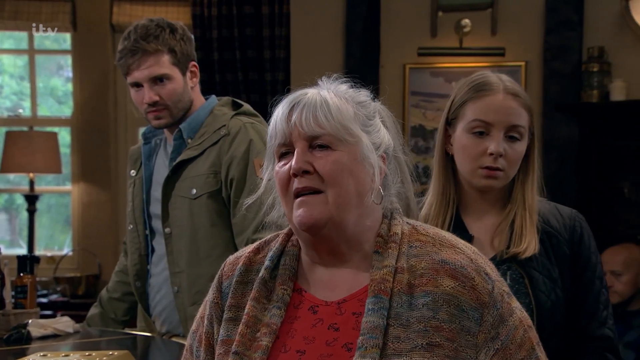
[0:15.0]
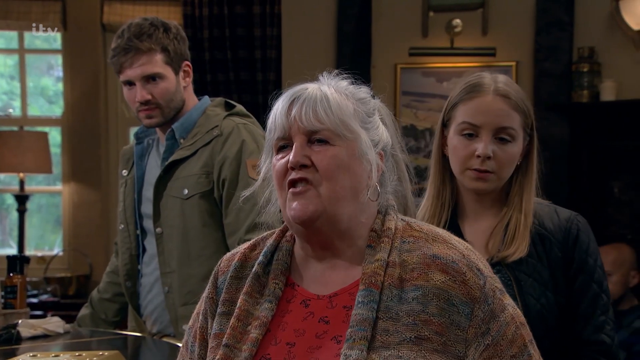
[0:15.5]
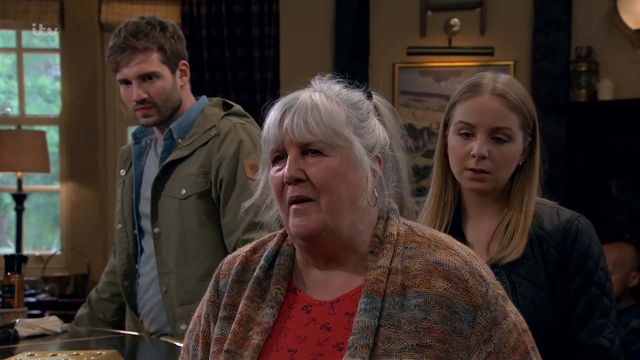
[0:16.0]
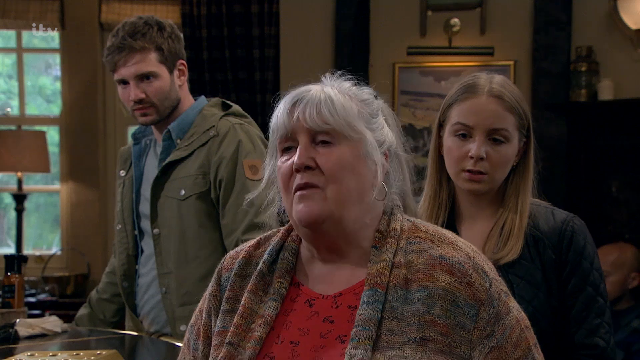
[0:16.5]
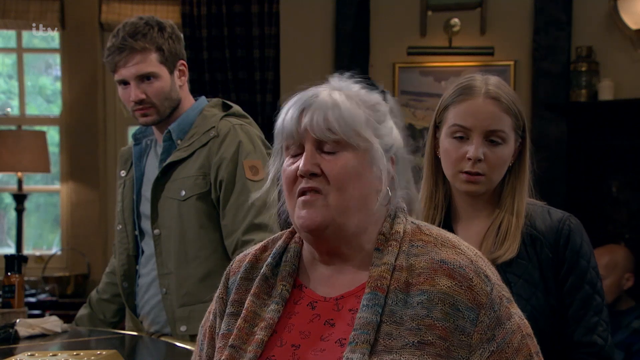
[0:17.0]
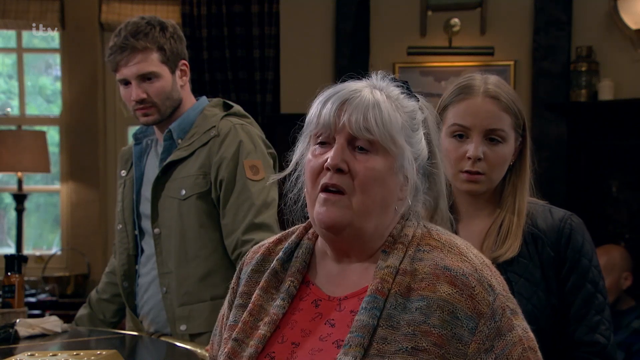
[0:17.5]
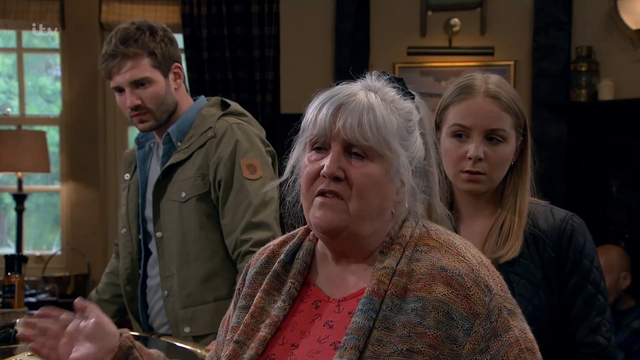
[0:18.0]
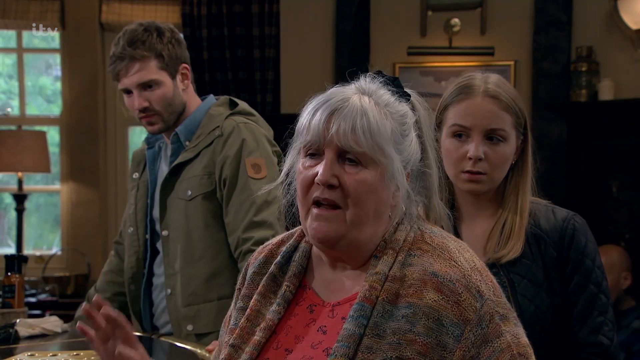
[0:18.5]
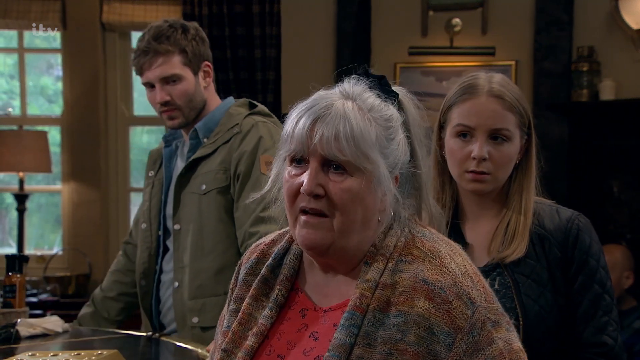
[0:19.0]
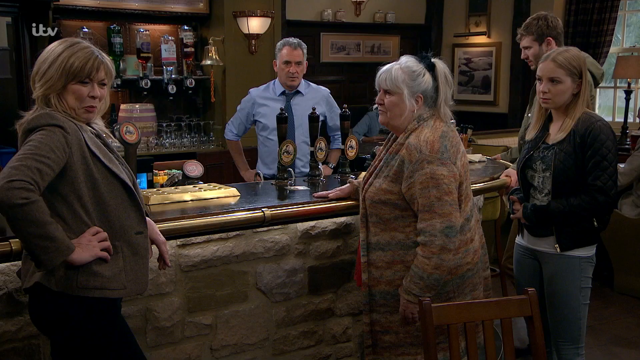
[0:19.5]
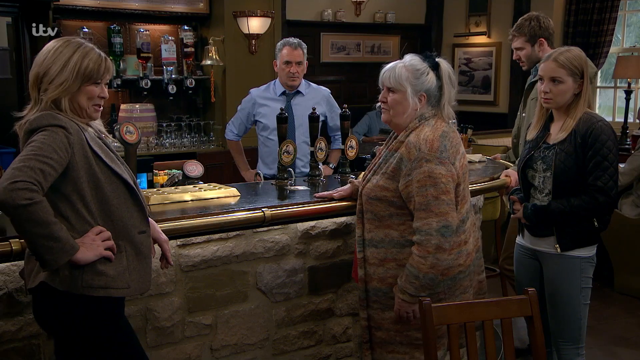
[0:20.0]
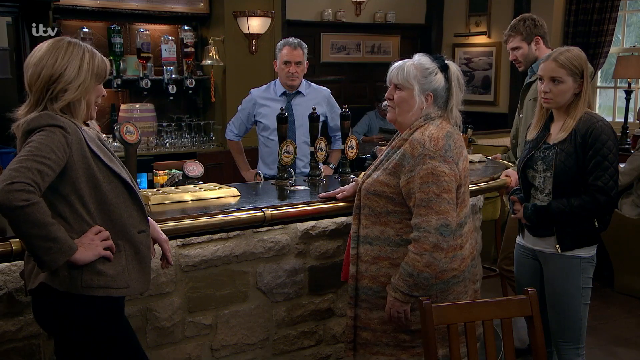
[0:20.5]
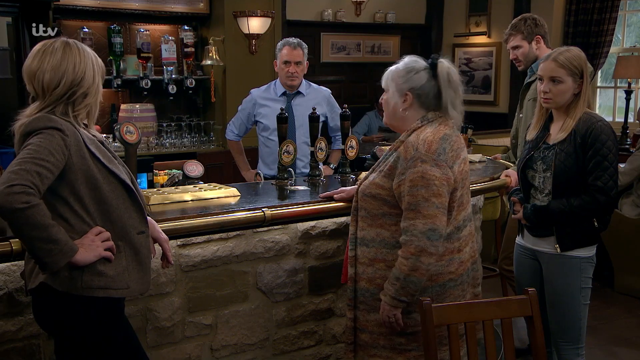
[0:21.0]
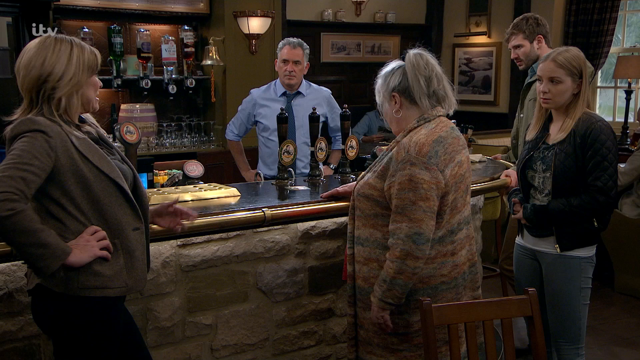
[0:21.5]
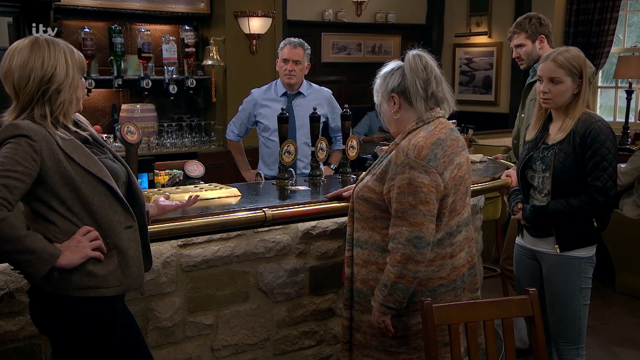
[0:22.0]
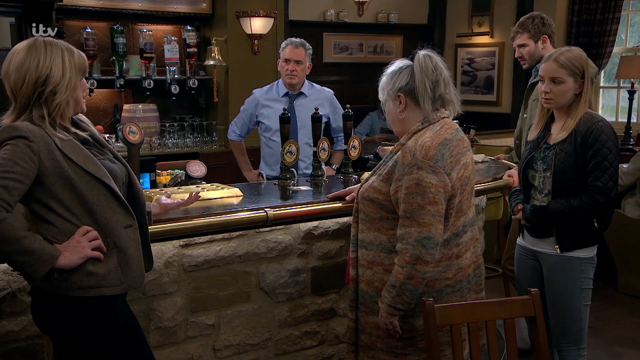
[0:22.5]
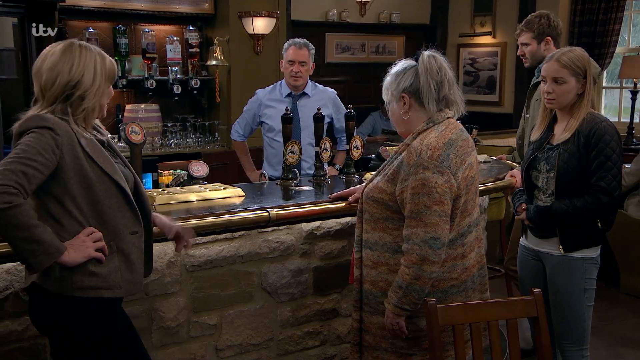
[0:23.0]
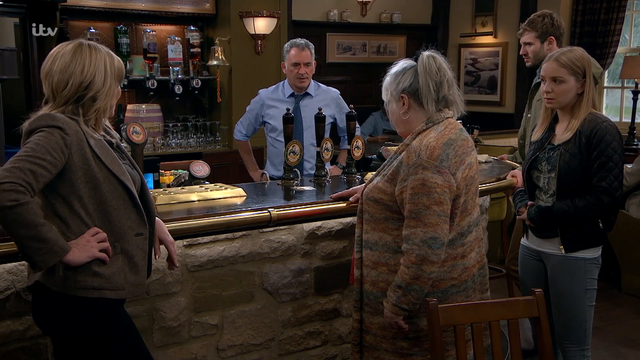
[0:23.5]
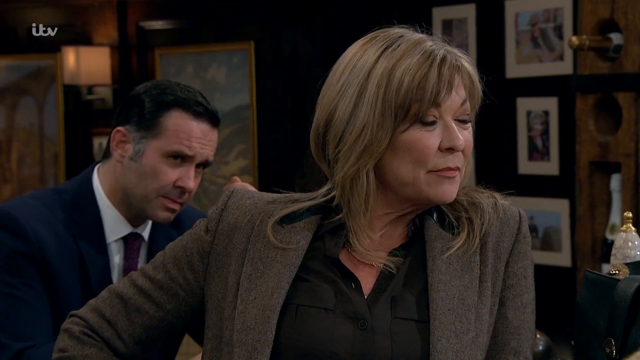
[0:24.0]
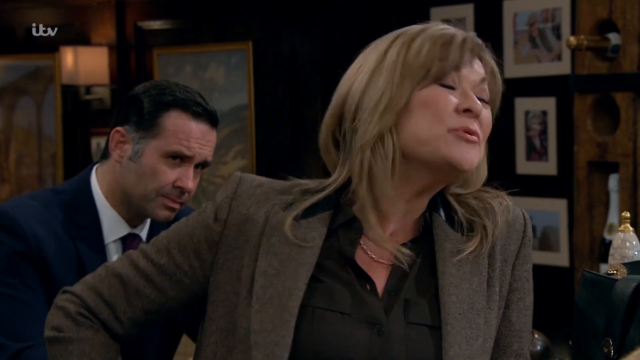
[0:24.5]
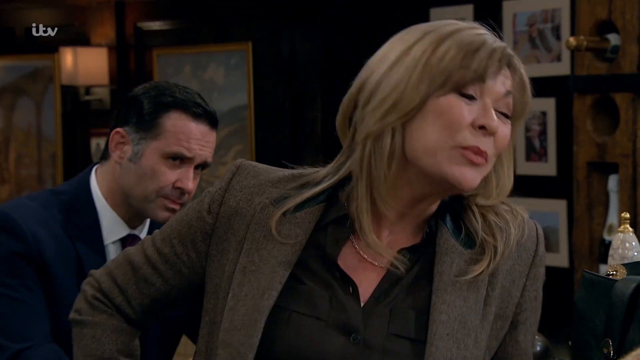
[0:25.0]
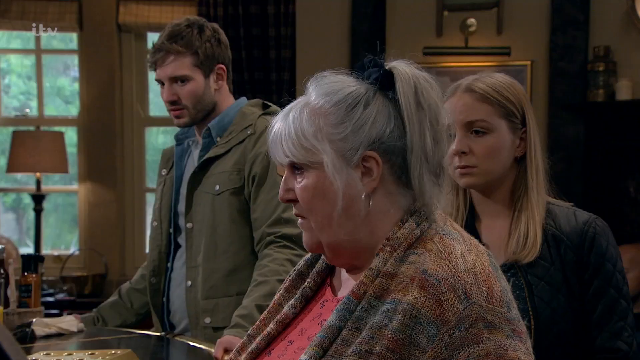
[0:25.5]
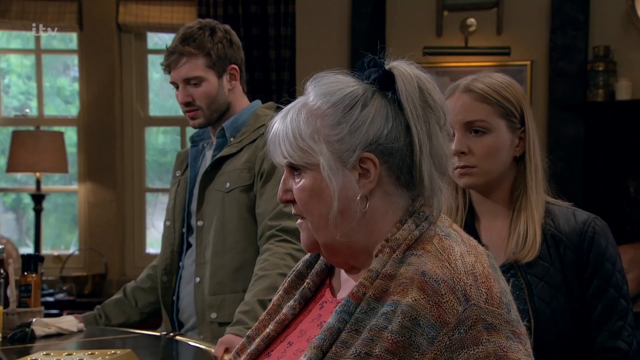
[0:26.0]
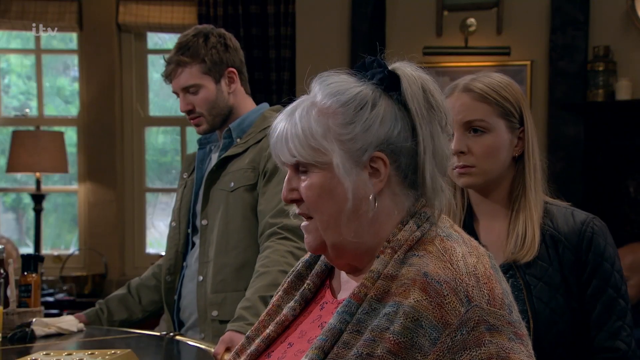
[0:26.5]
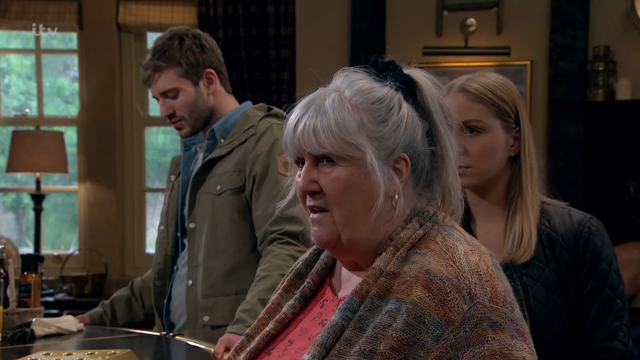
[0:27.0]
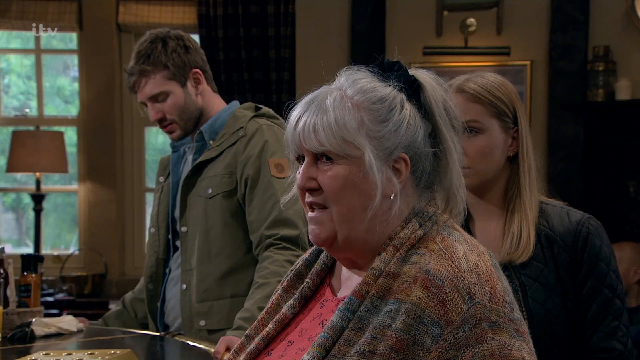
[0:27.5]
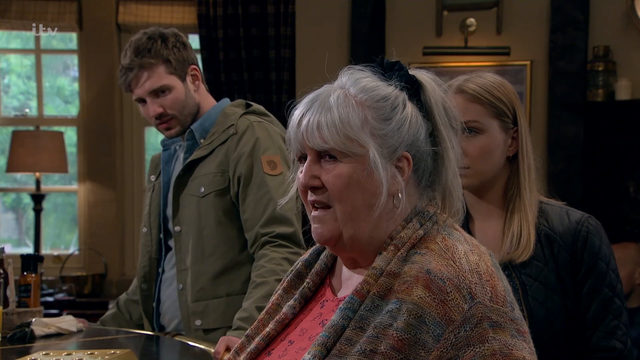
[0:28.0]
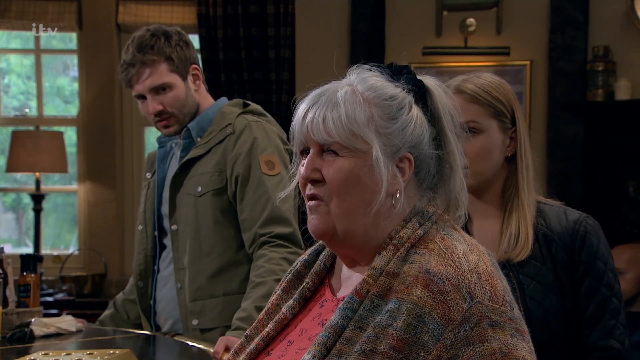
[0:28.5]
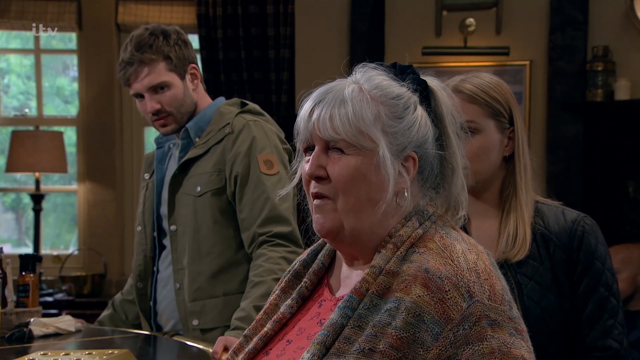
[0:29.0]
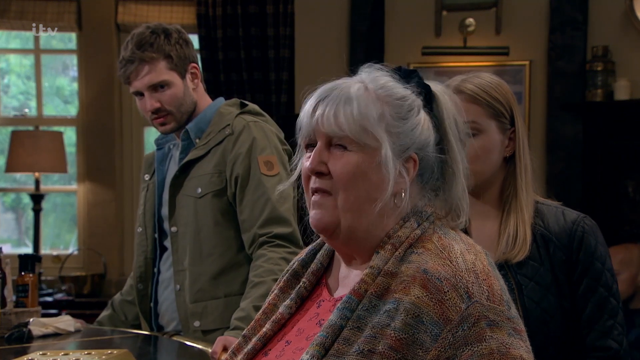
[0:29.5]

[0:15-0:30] The older lady talks to someone; she wears what seems to be a pink shirt underneath a multicolored coat. The camera pans out. A man in a blue button-up shirt is behind the bar, and on the bar are taps with pole handles for various beverages, presumably beer. There are four people in the shot. The older lady is mainly talking to another woman who is to her left, and then the barkeep interjects. There is a man in the background. Everyone is still inside, wearing the same dress casual attire, and more beverages are visible in the background.